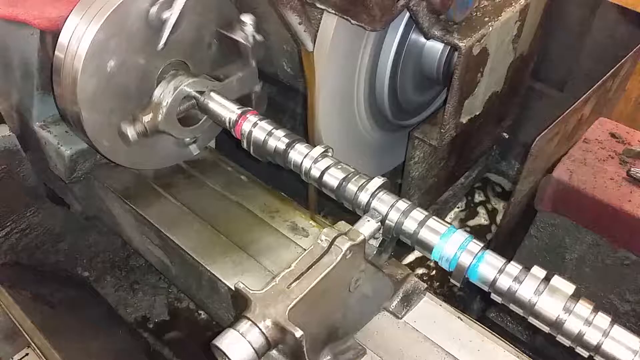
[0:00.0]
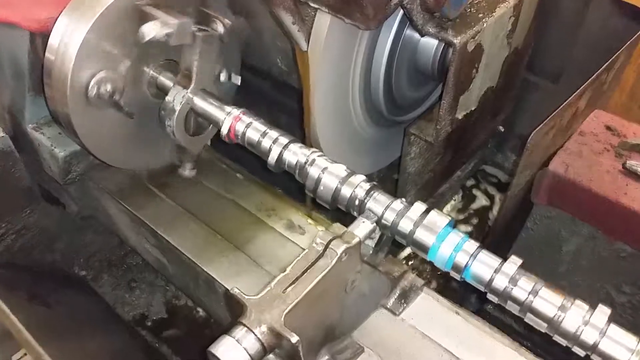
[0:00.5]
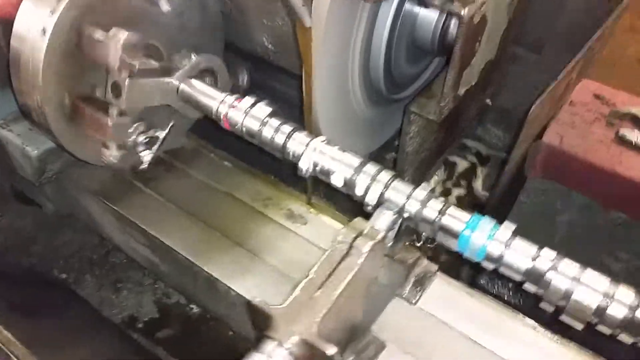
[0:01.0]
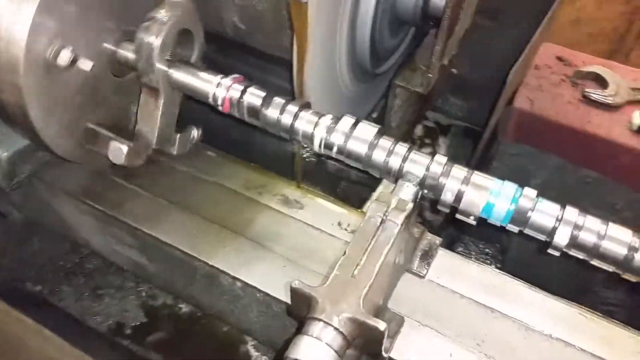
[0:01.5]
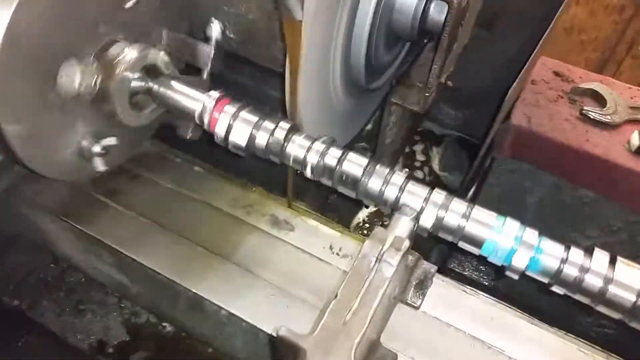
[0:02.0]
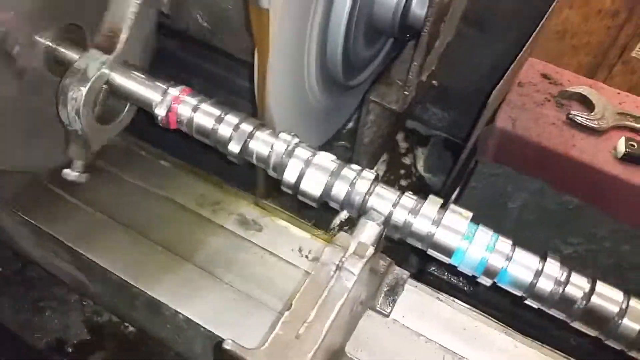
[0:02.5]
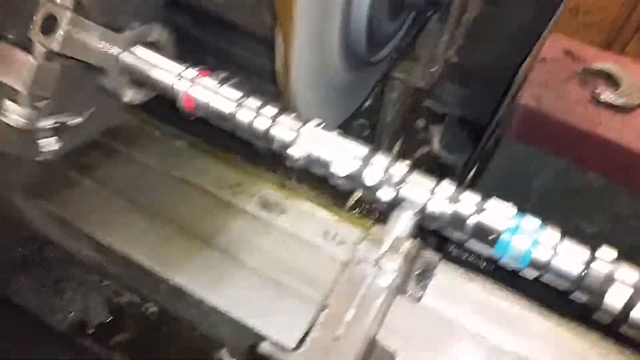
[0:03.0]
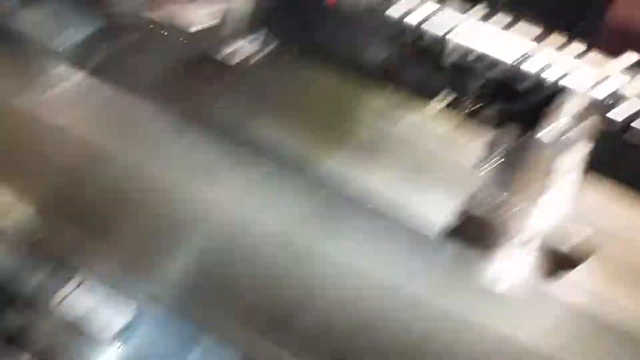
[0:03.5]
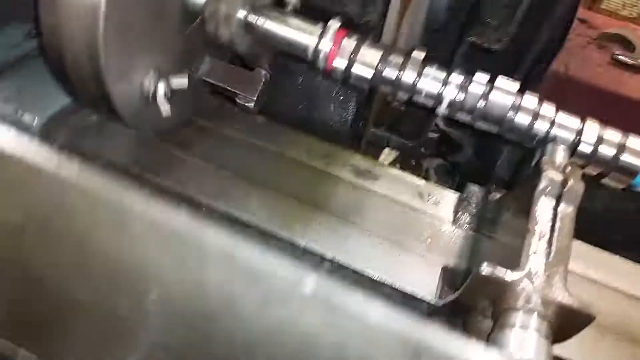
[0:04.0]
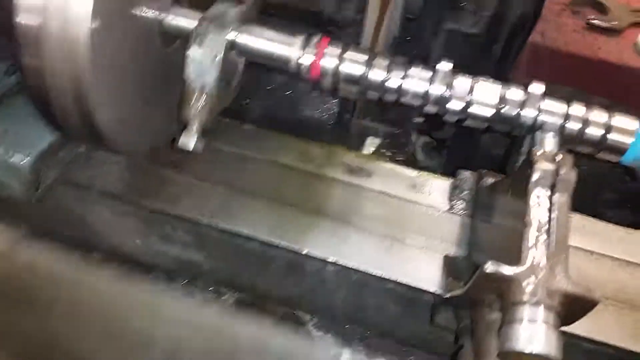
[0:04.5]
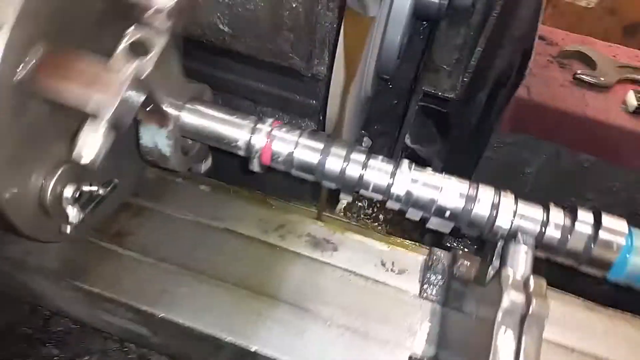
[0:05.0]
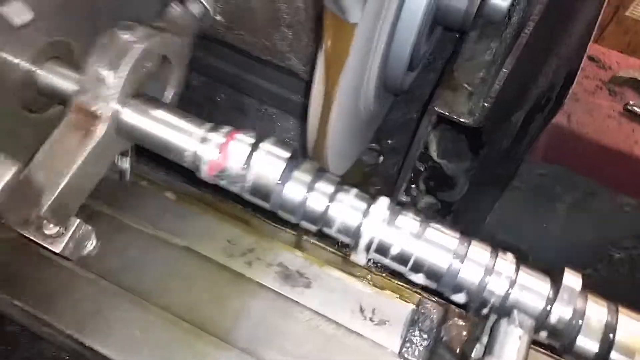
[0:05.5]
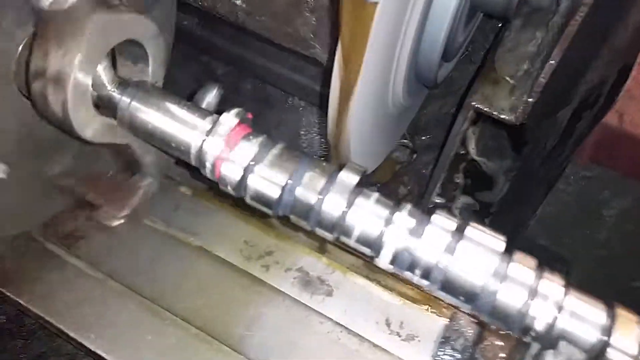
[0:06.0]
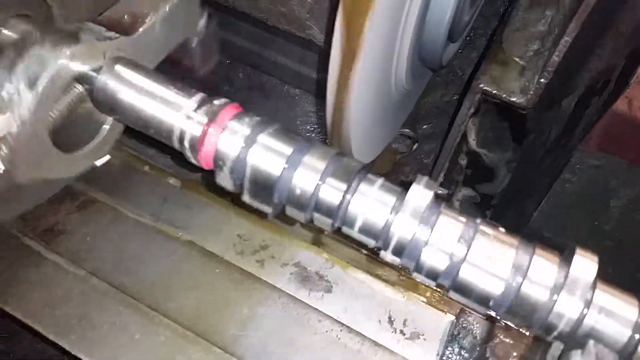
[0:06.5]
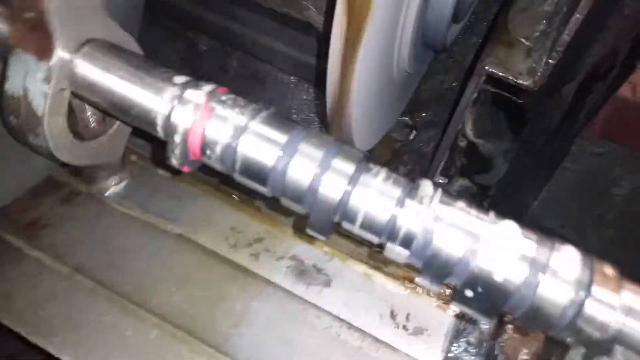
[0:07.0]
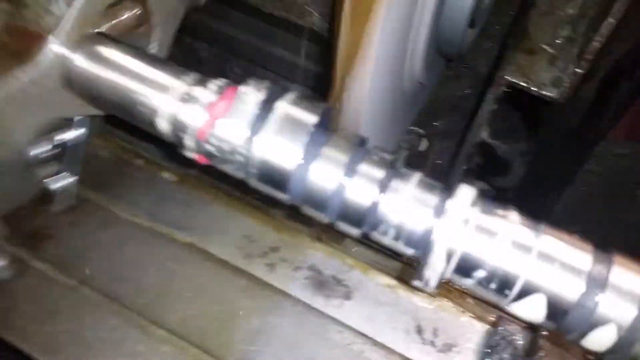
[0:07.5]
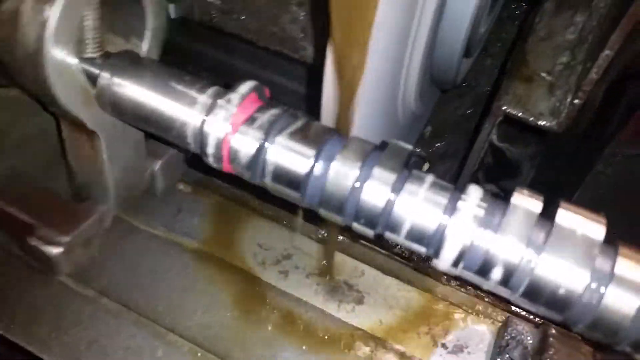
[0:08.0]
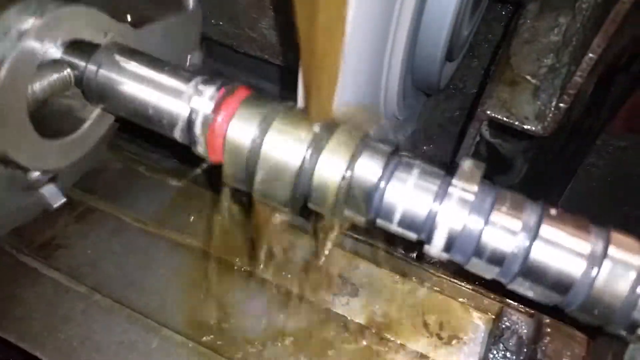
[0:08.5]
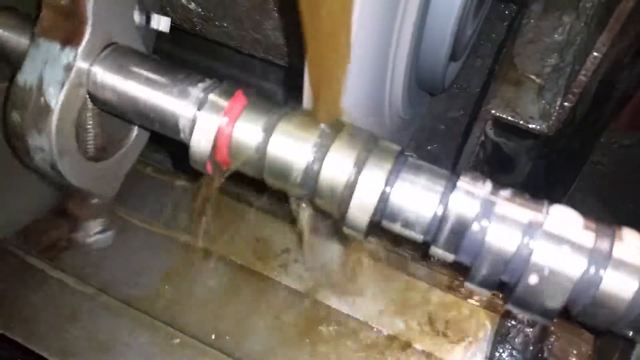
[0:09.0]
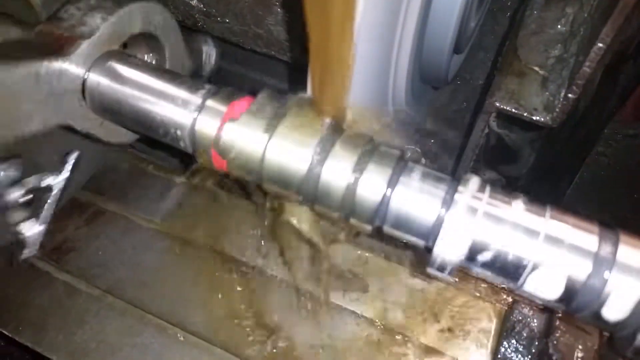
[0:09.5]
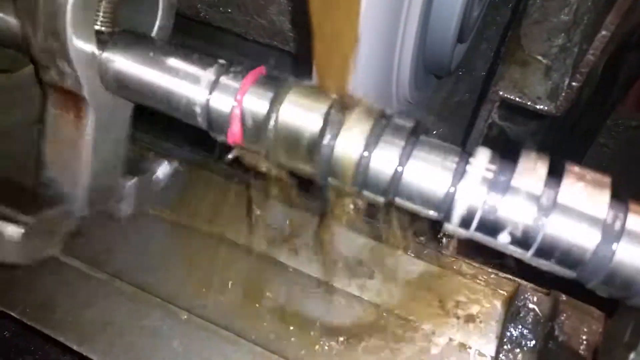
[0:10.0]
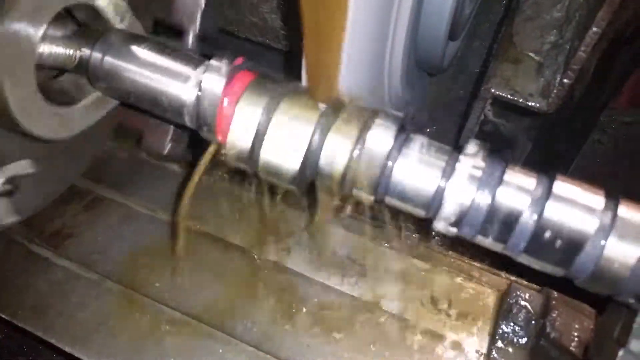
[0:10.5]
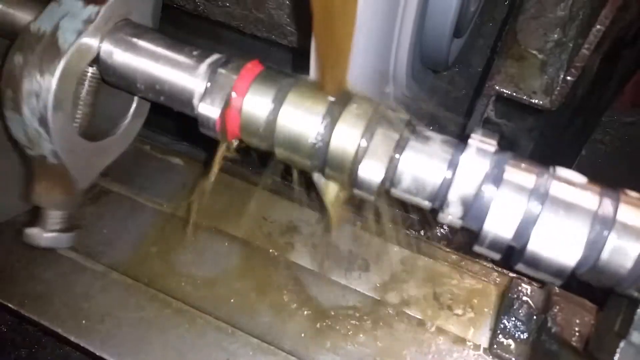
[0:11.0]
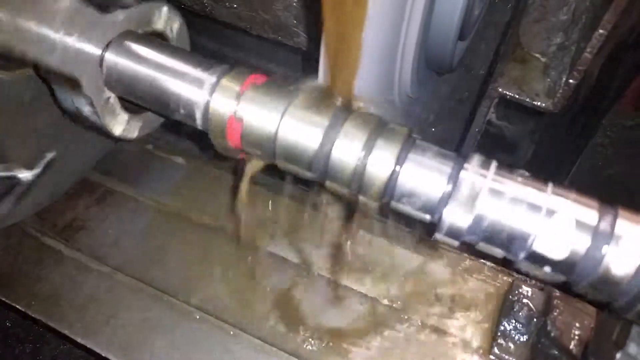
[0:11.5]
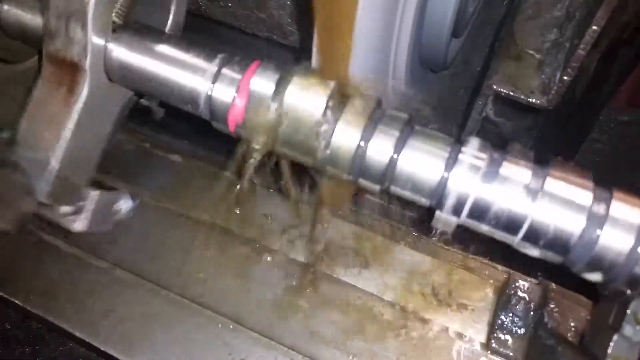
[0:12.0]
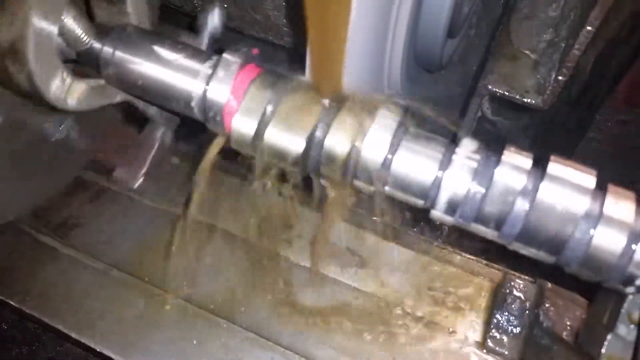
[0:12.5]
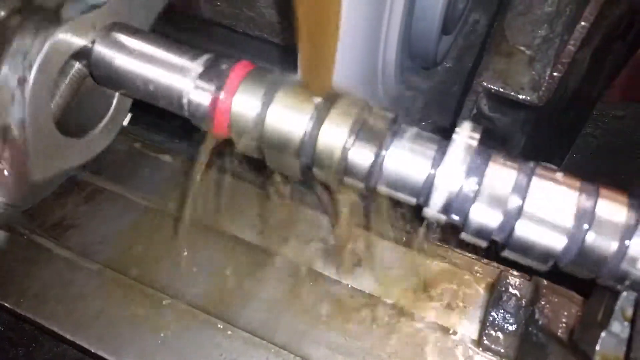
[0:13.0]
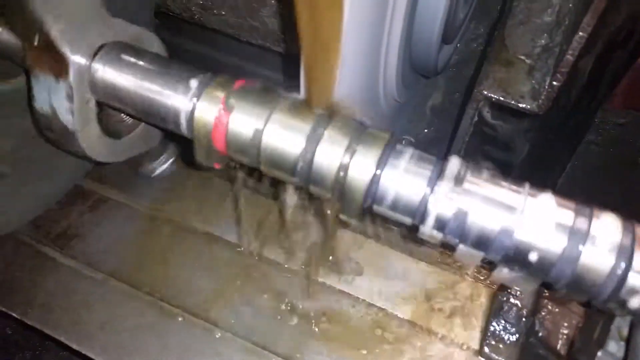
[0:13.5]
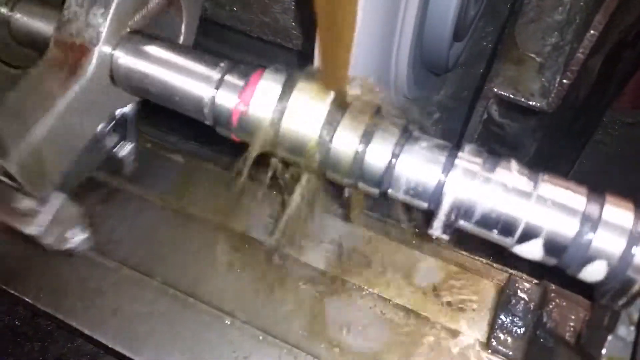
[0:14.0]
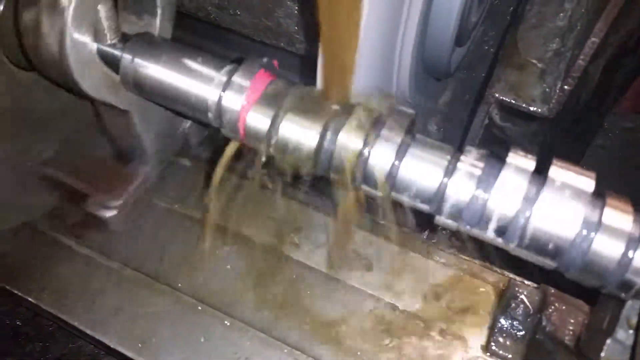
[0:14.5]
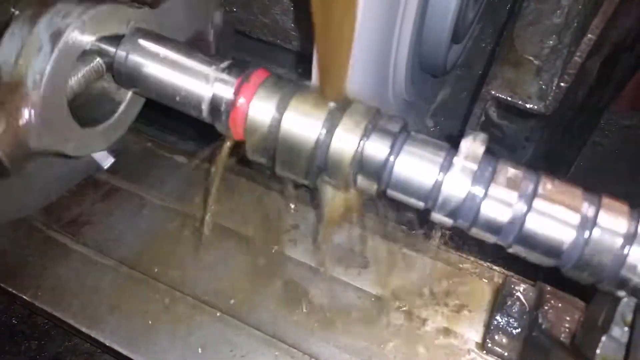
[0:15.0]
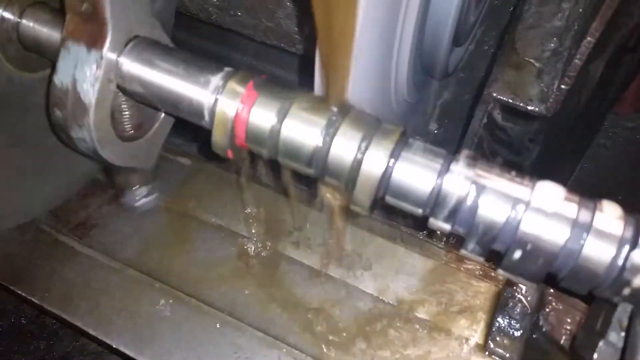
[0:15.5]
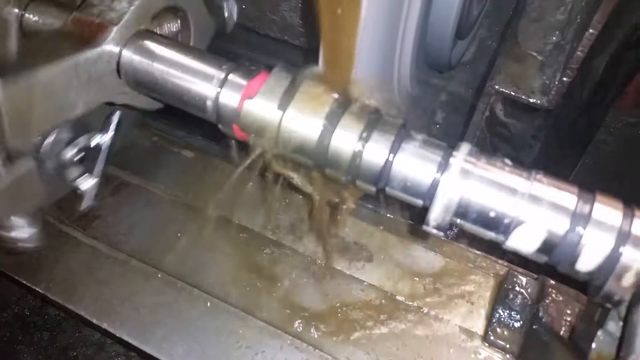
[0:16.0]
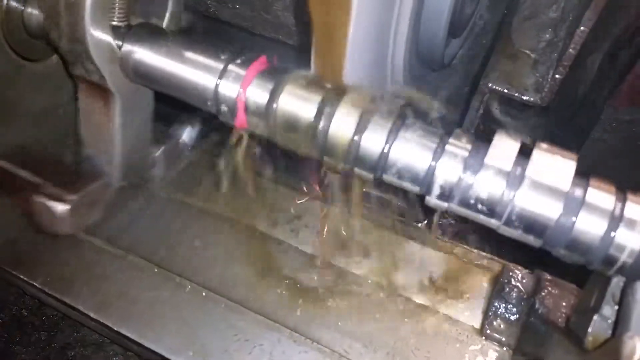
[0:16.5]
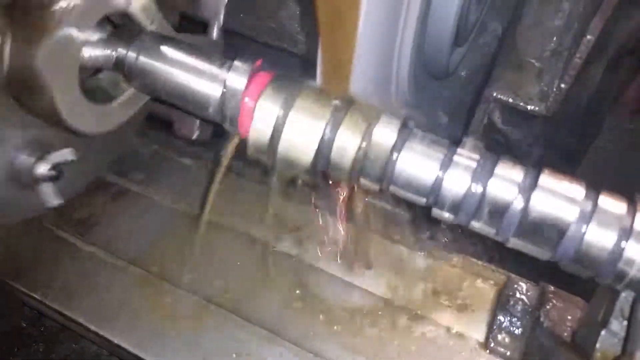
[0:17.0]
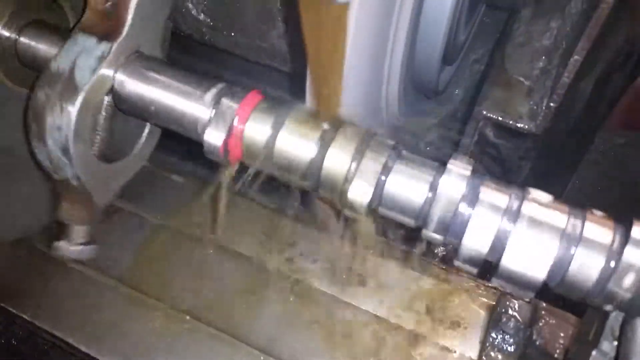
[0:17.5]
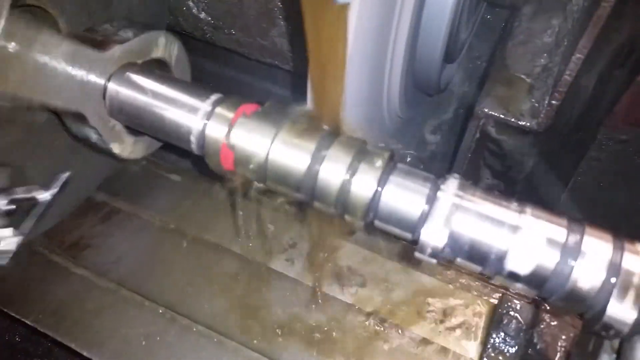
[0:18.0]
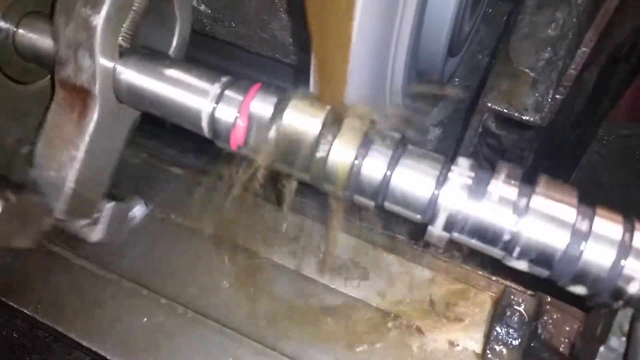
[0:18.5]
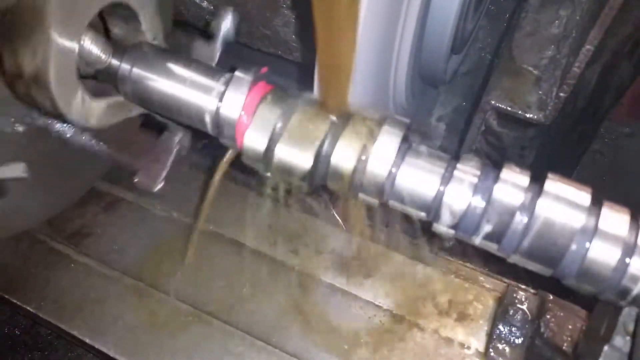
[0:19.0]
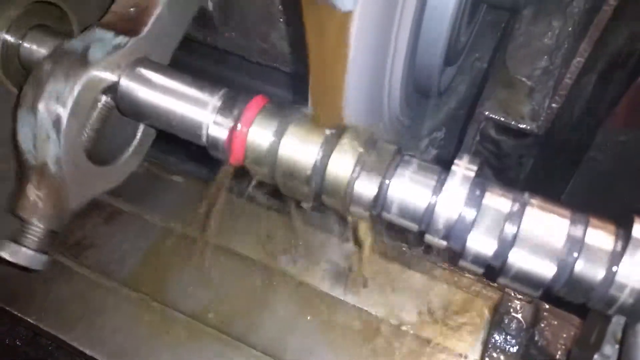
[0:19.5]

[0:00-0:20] The setting appears to be industrial, where a machine is being cleaned and oil is being applied to it. The machine looks old, and the work seems aimed at making it look new; it is working, and the difference between before and after is visible. Another part of the machine still does not look clean.